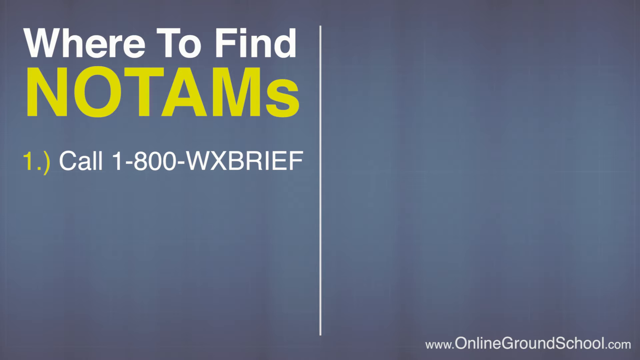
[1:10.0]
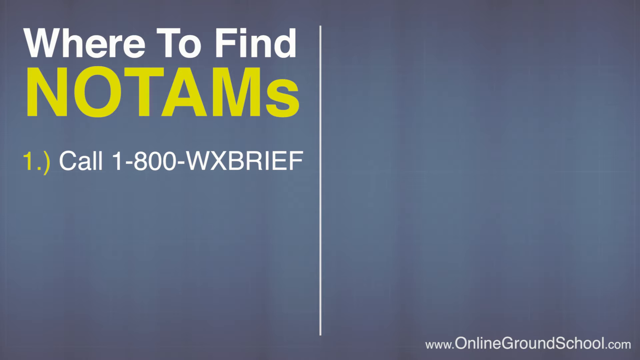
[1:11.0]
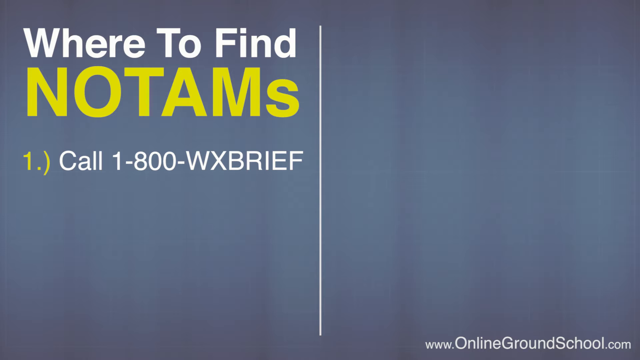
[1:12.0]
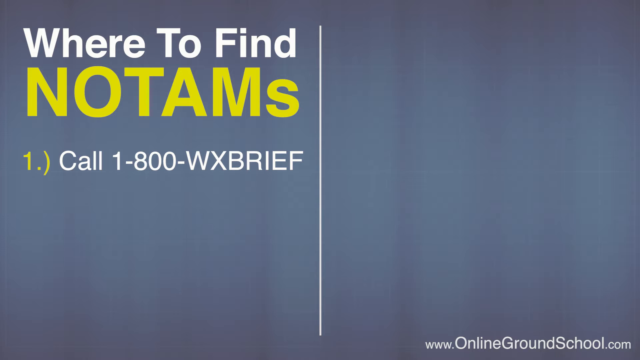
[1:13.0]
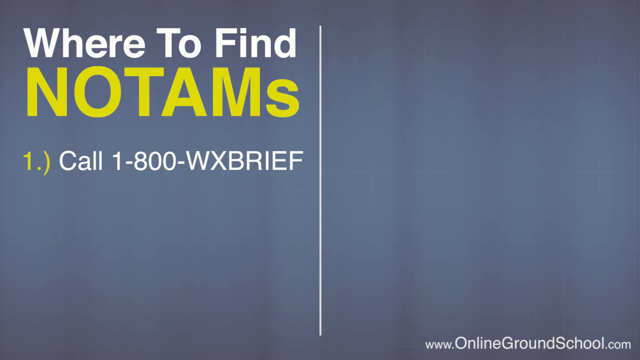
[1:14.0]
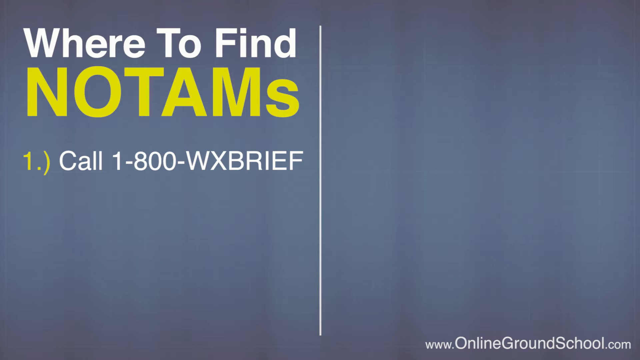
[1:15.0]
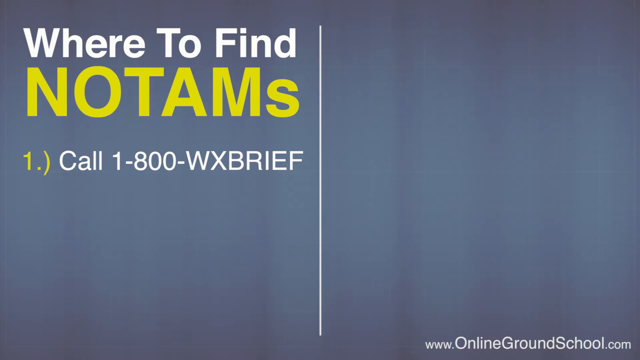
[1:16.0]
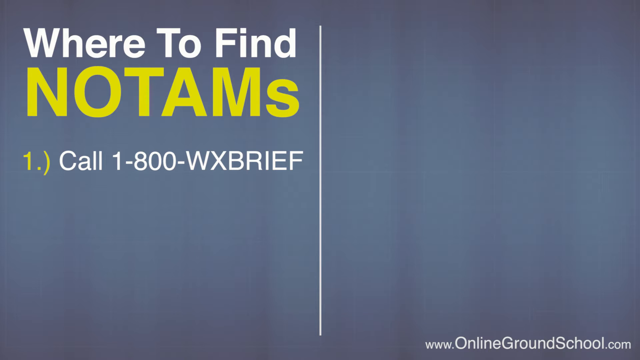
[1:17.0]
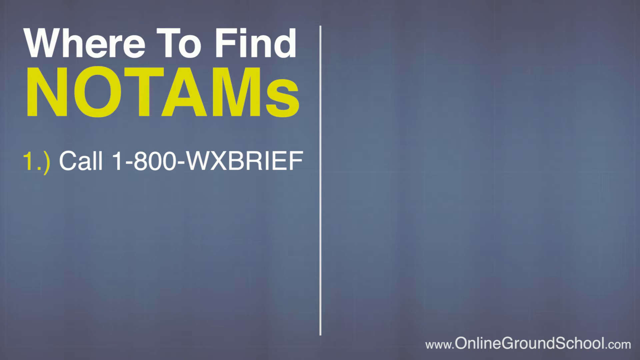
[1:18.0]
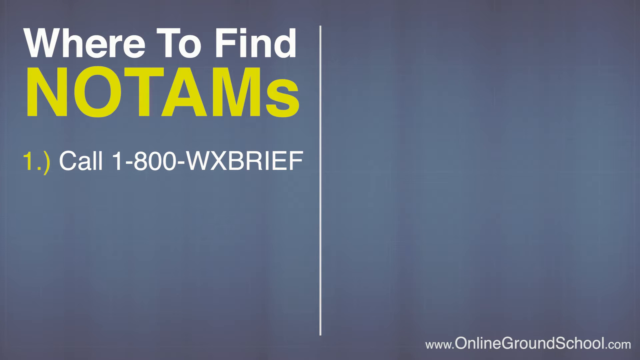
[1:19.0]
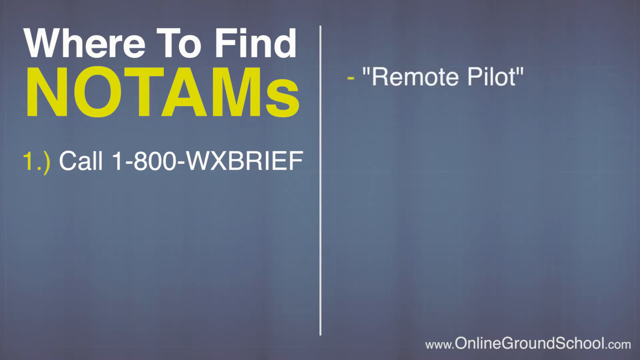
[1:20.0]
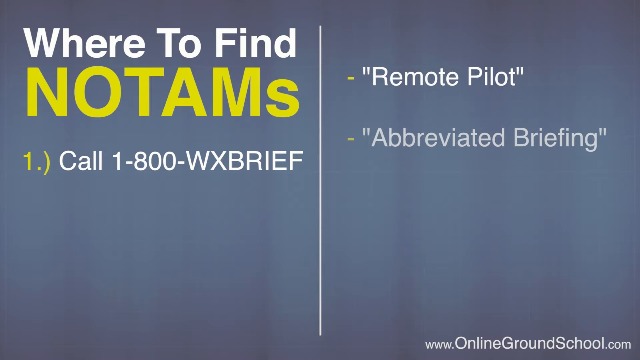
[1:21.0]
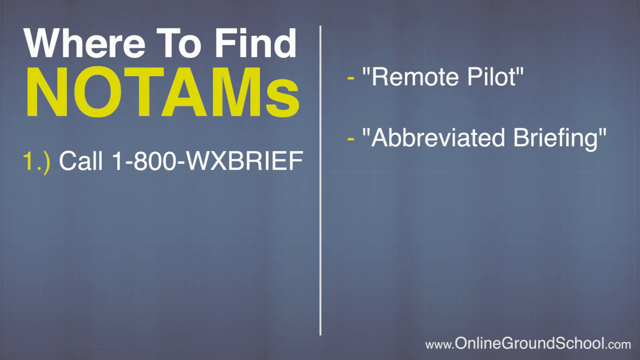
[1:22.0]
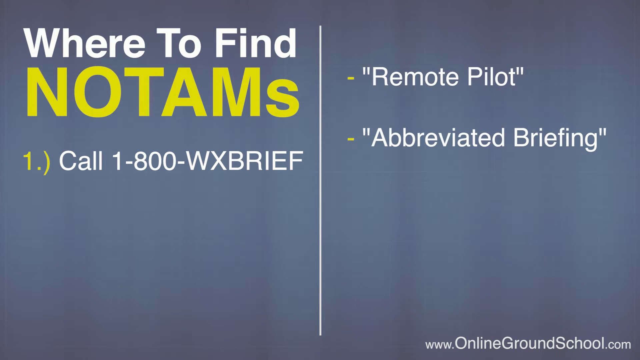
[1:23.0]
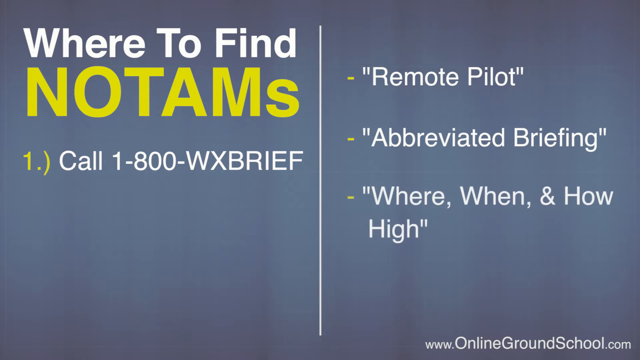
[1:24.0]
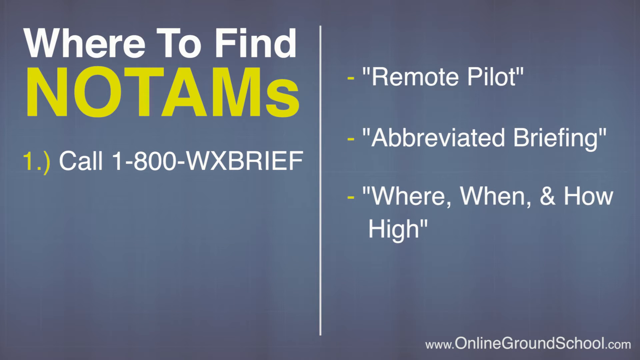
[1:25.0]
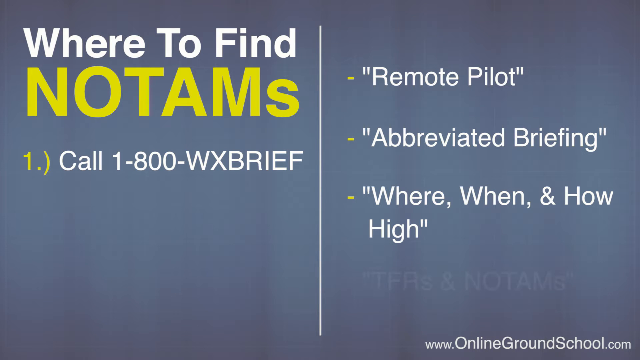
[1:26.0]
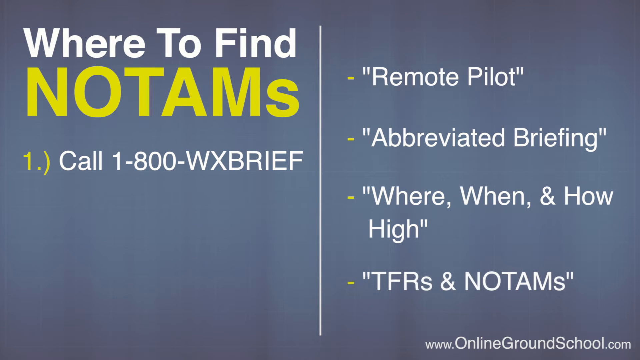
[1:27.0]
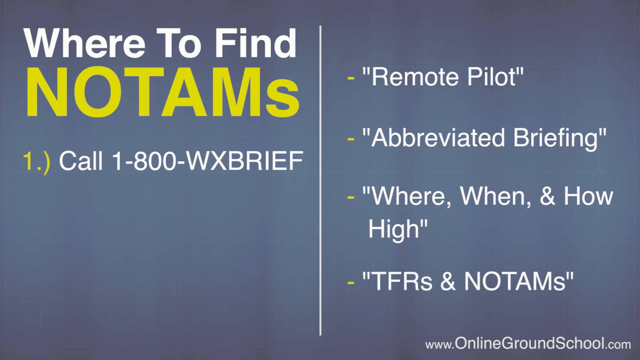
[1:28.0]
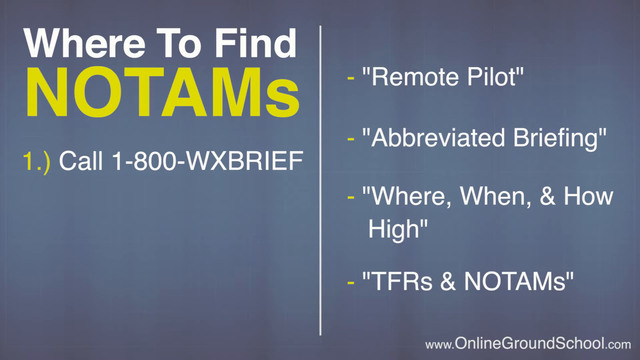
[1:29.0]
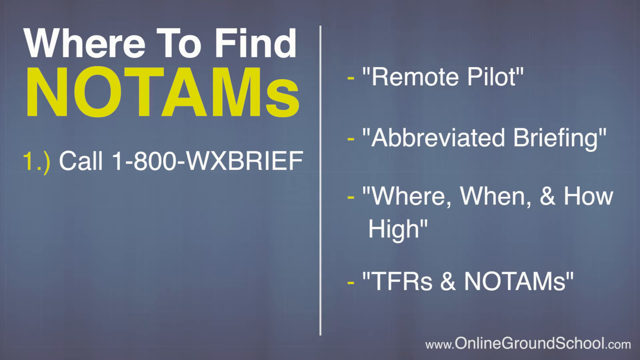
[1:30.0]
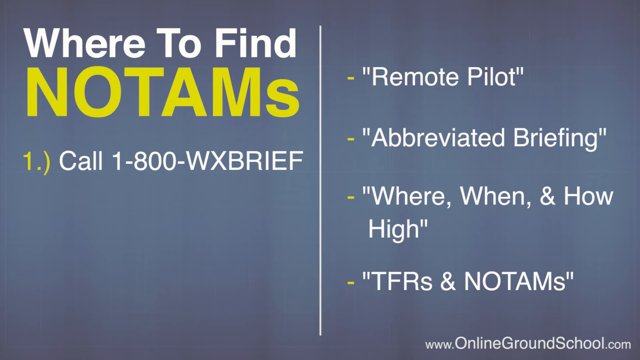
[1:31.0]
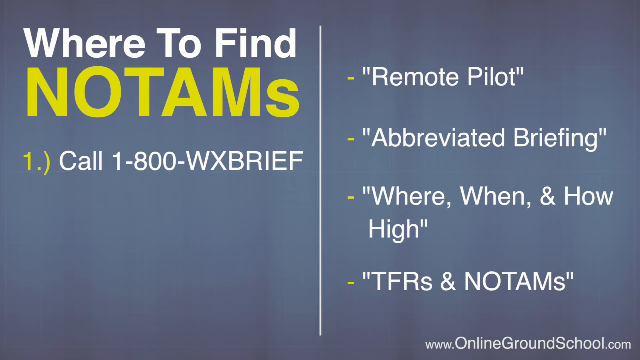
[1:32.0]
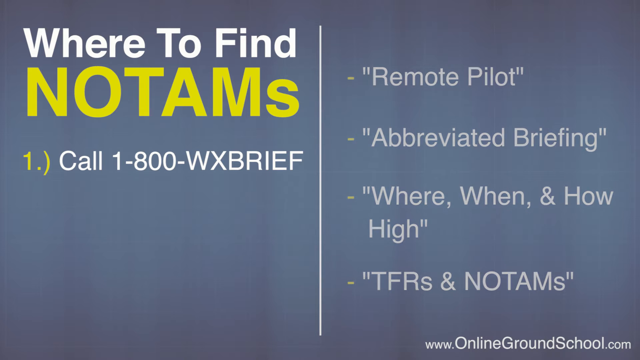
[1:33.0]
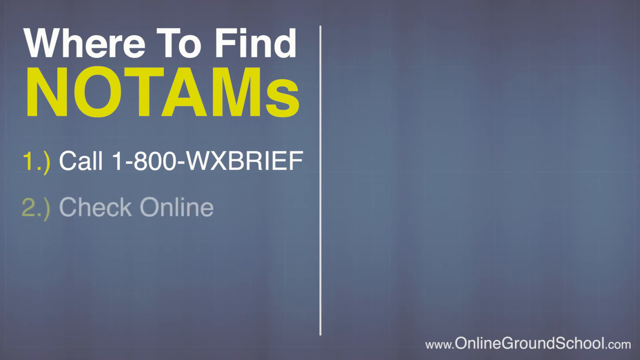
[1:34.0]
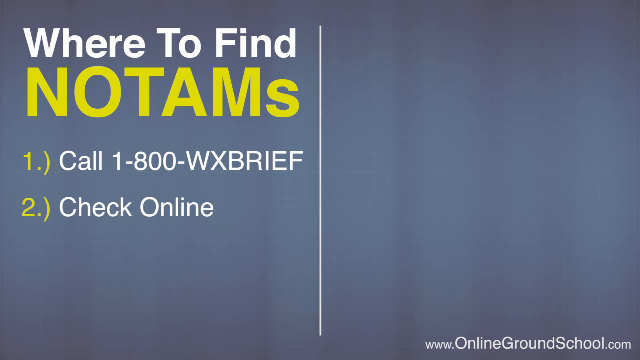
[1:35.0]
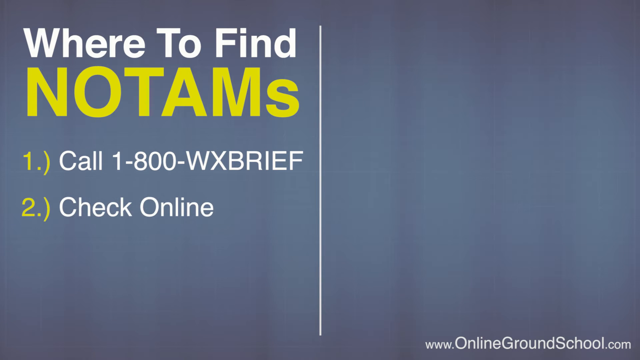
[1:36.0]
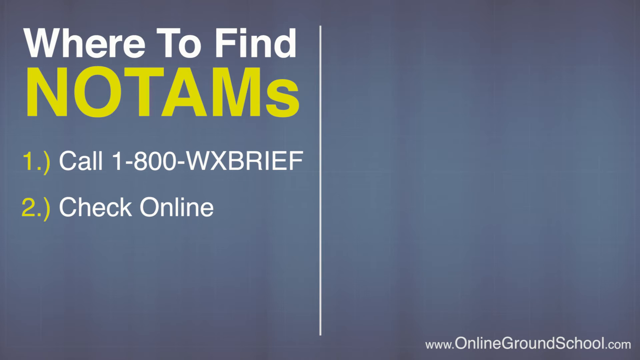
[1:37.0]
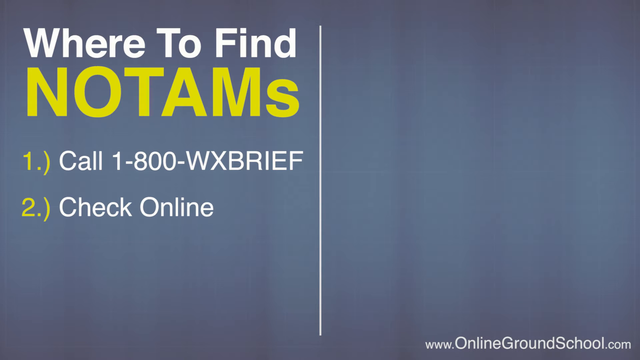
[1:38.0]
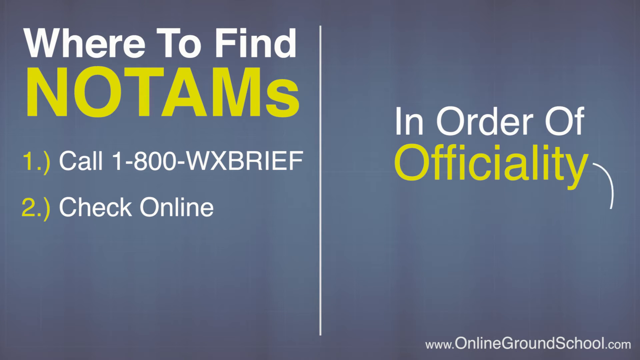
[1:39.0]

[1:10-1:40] A screen with a solid bluey-grey background shows a web address in the bottom right-hand corner reading "www.onlinegroundschool.com". The screen is split in half by a solid vertical white line. On the left side, title text reads "where to find notams", with a bullet point numbered one reading "call 1-800-WXBRIEF". On the right side, dashed bullet points appear using a single dashed yellow line: the top one reads "Remote Pilot", the second "Abbreviated Briefing", the third "Where, When and How High", and the last "TFRs and NOTAMs". This right-side text disappears, and on the left a second numbered bullet point appears reading "check online". Text appears again on the right reading "in order of officiality", and an arrow appears underneath, pointing downwards.